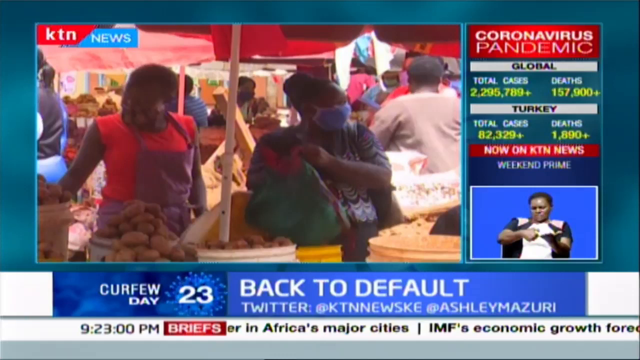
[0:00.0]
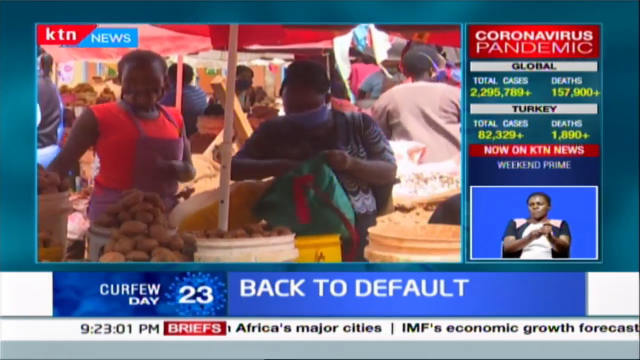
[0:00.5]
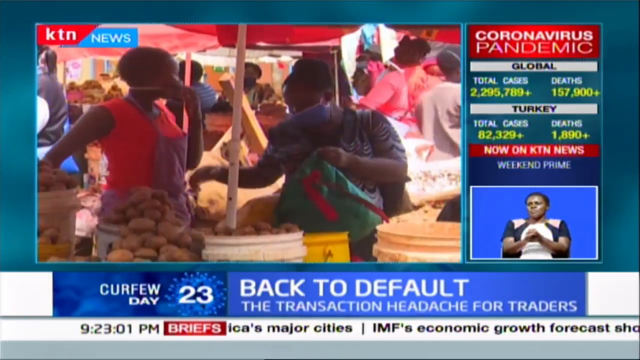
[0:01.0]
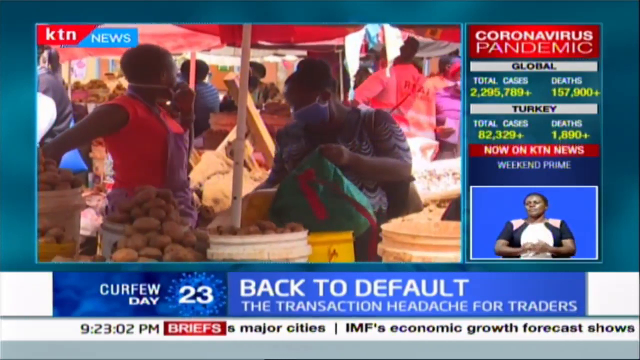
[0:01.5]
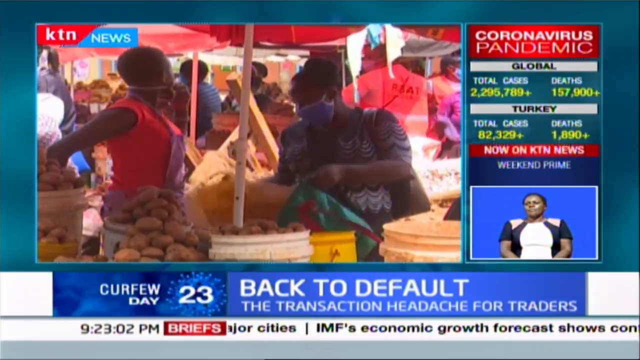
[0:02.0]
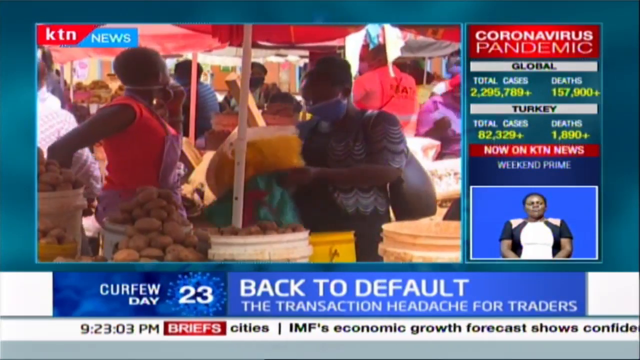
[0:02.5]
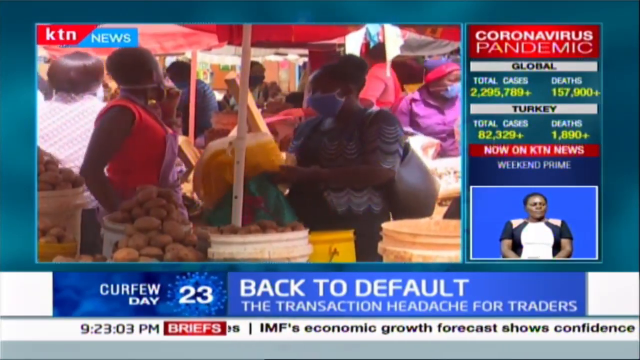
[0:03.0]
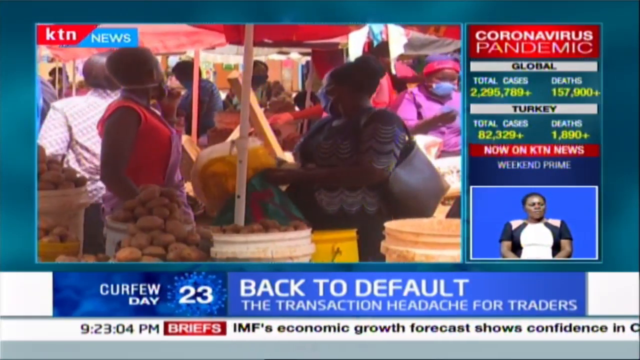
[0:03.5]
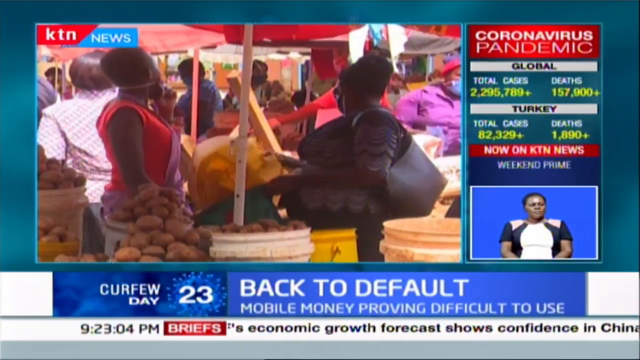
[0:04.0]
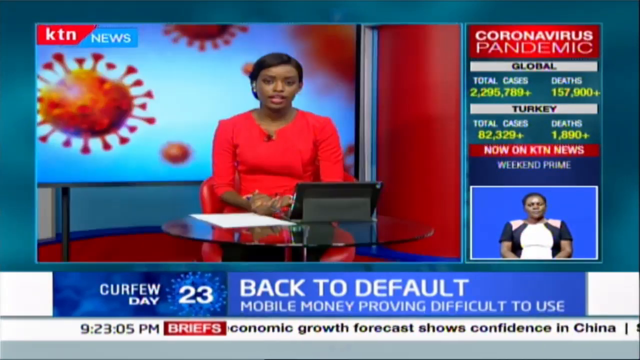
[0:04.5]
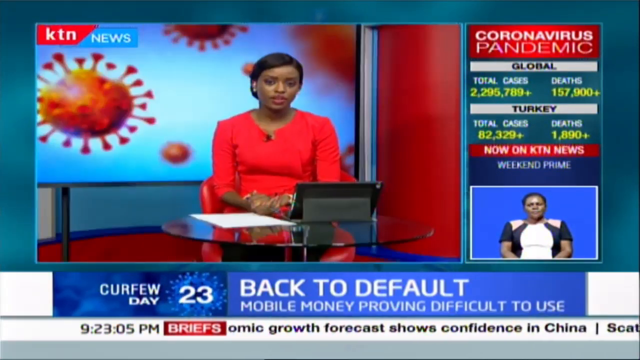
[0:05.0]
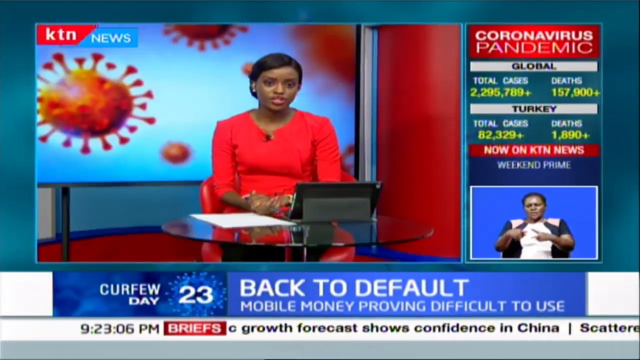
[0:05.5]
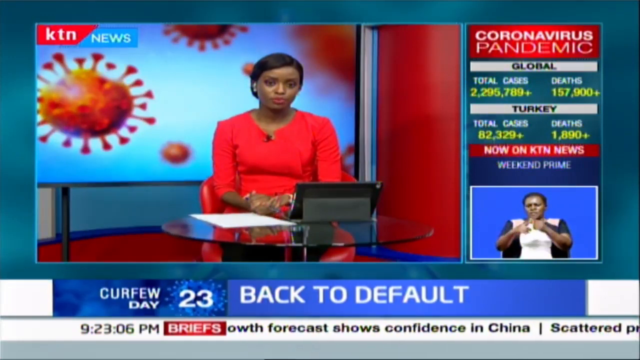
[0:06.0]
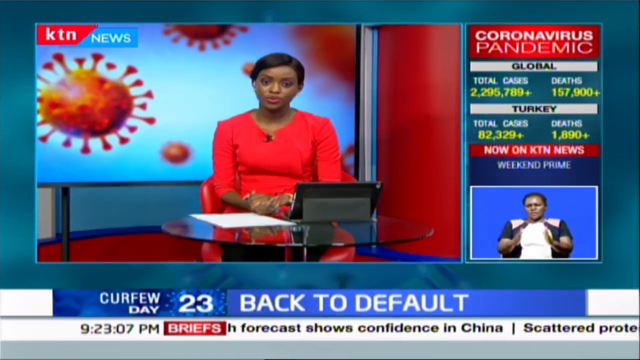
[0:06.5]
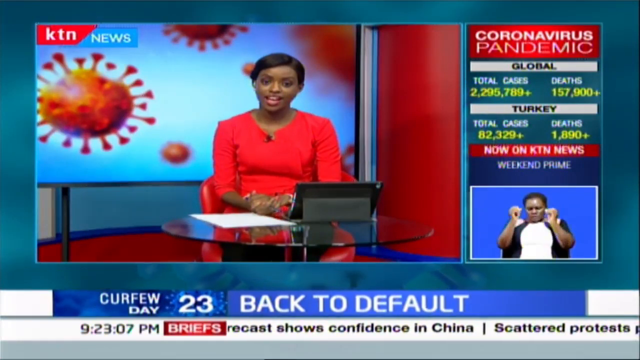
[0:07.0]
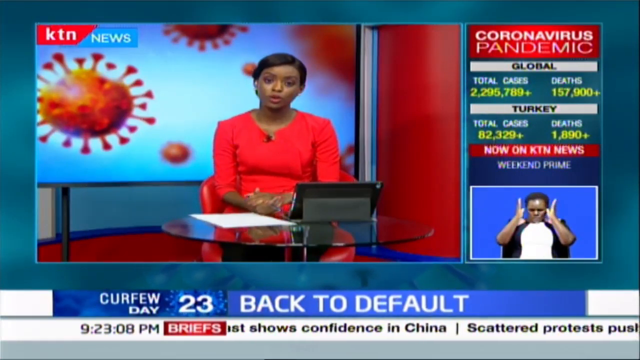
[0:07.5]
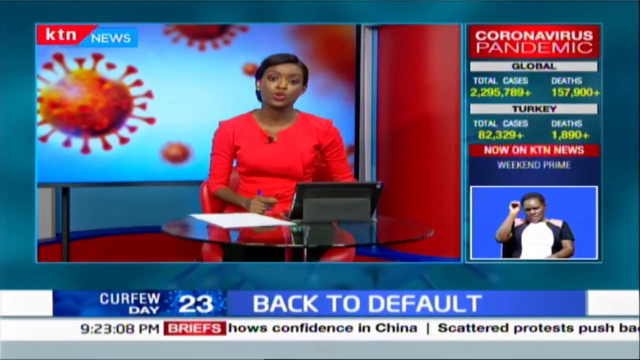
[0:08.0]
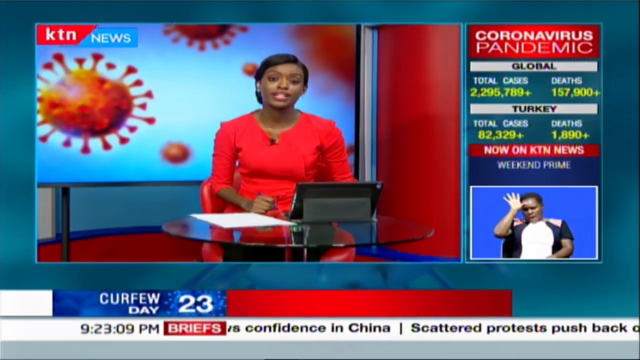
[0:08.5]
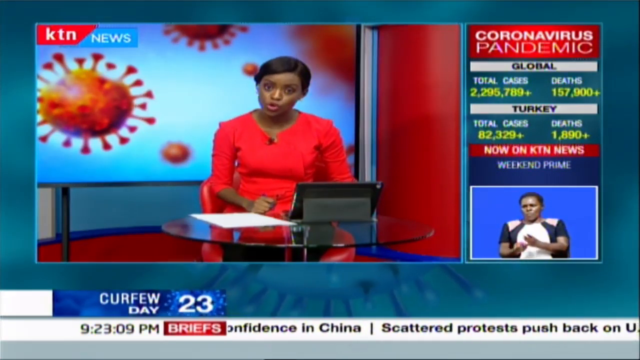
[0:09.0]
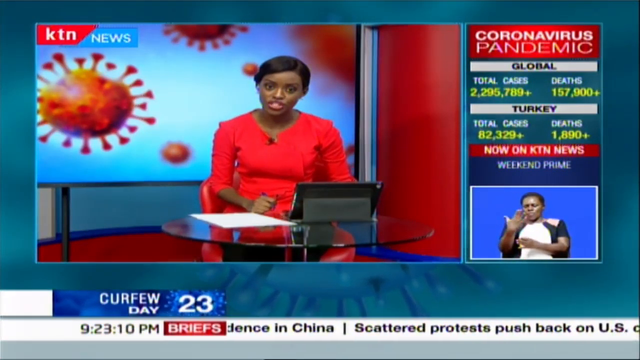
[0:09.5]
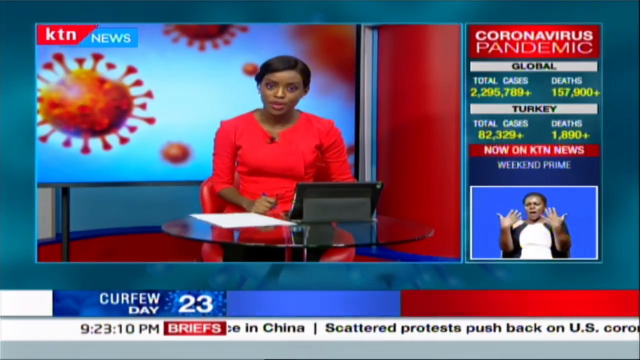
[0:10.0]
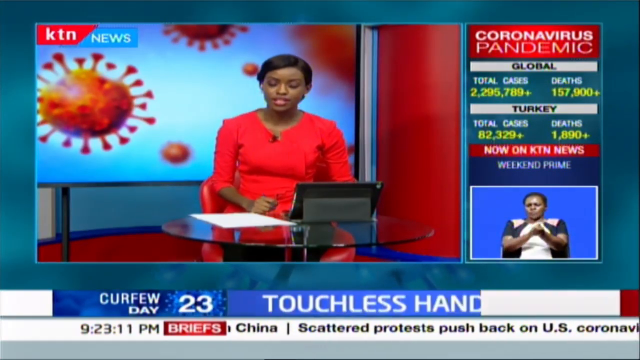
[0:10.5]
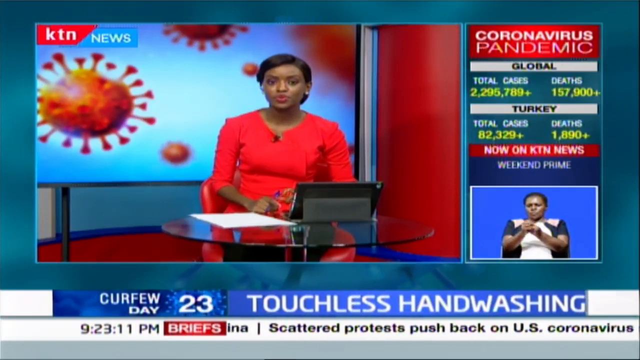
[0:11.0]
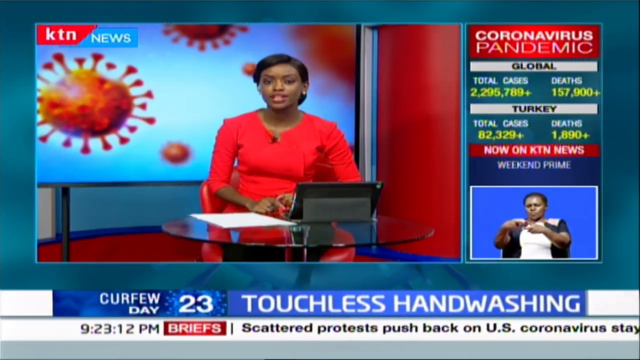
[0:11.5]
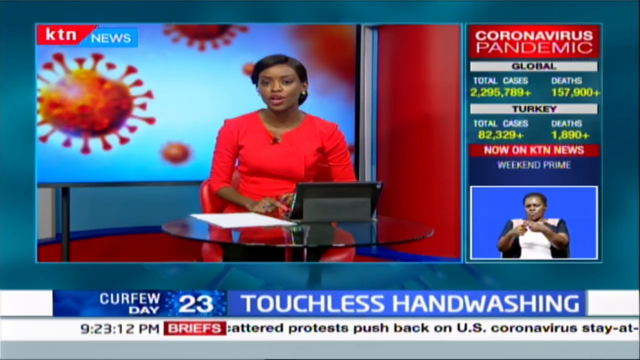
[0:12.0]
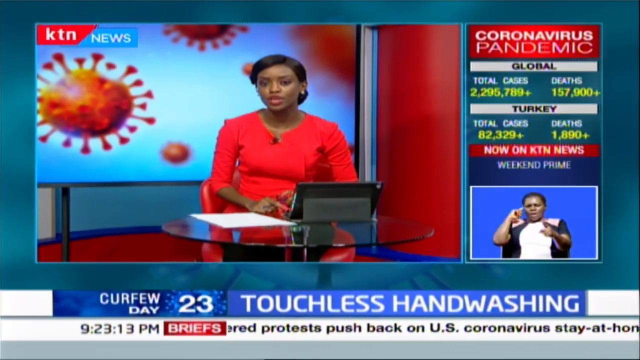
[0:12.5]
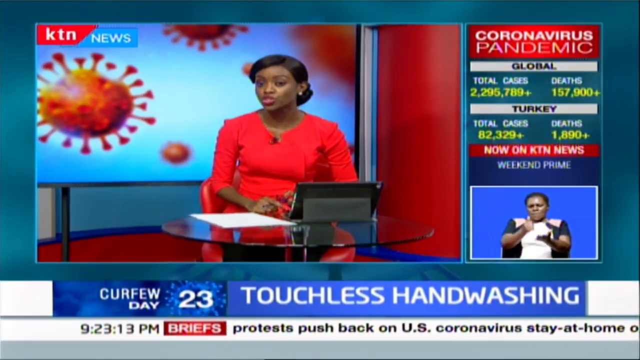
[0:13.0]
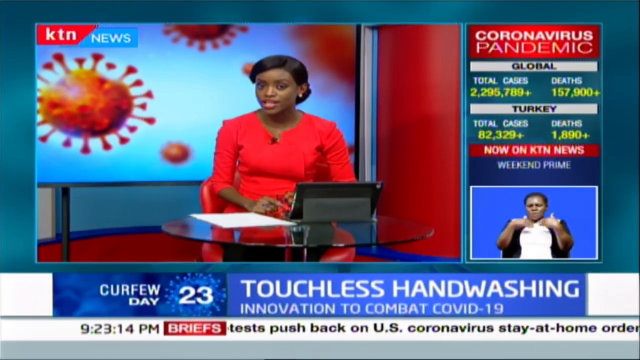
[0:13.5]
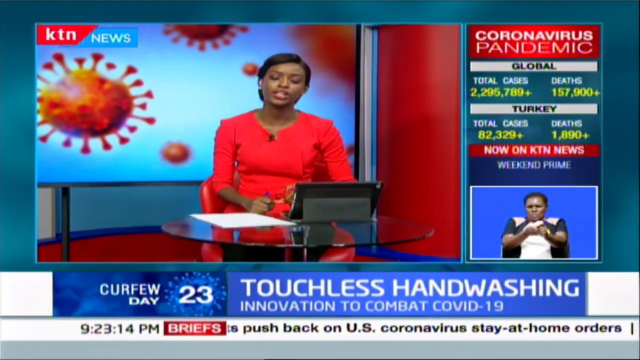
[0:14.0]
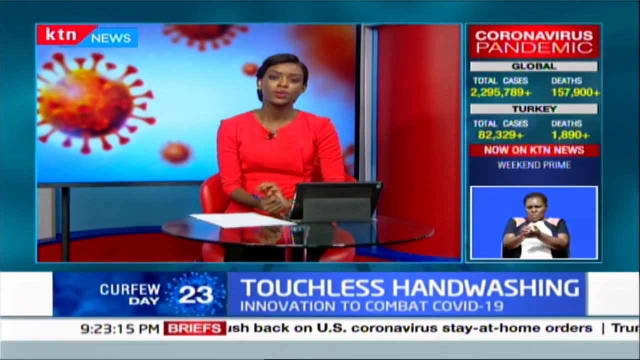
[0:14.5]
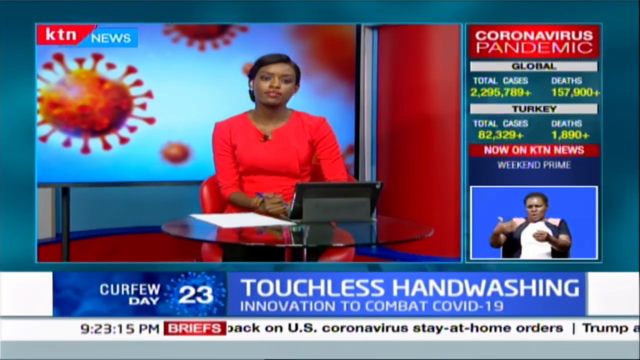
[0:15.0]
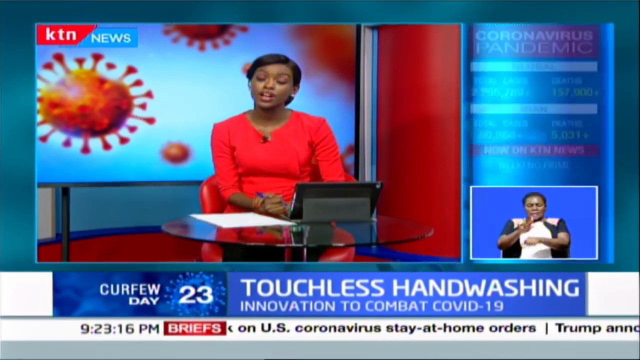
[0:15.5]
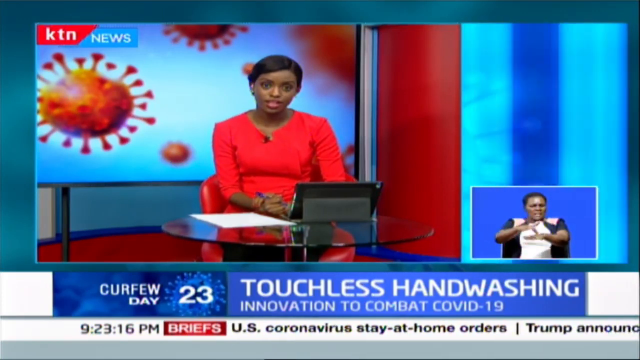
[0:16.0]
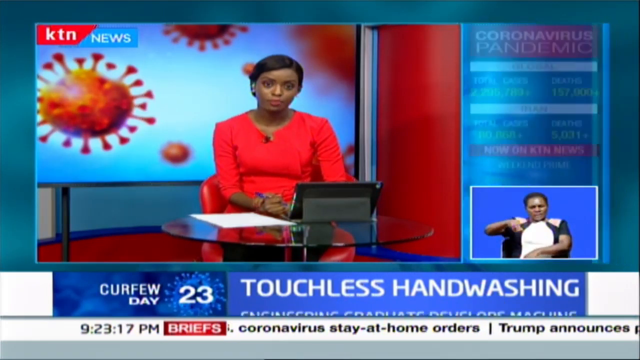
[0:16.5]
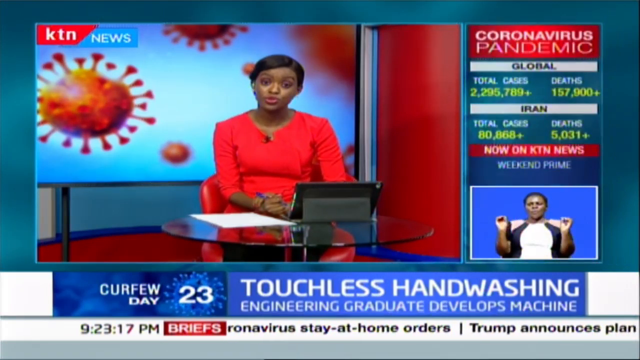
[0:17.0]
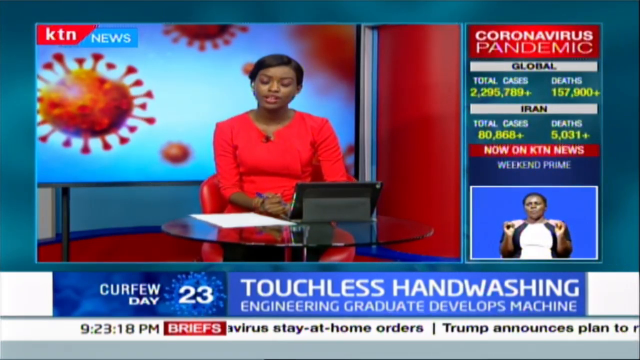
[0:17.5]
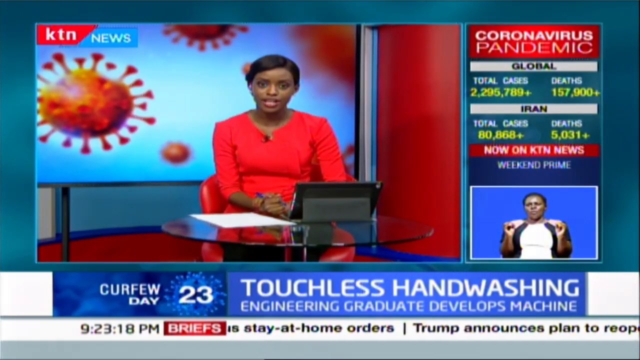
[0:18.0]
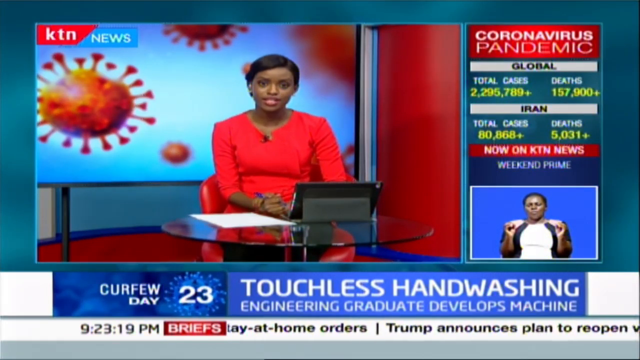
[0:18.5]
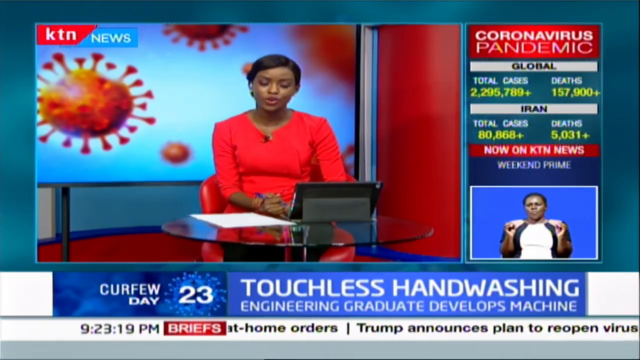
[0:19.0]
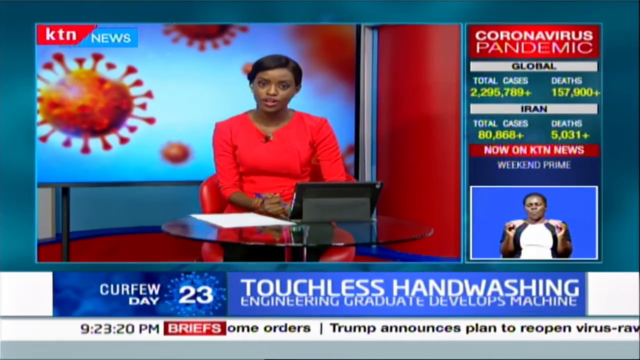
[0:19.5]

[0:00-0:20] A news broadcast, apparently from somewhere on the African continent, shows a banner in the upper right of the screen that says "coronavirus pandemic." A banner across the bottom of the screen reads "curfew day 23, back to default, the transaction headache for traders." The main portion of the screen says "KTN news" and shows video of women shopping in a market. It then transitions to another woman talking on screen, apparently the newscaster. In the lower right part of the screen, someone is doing sign language. A ticker along the bottom of the screen mentions Africa, reading "in Africa's major cities."